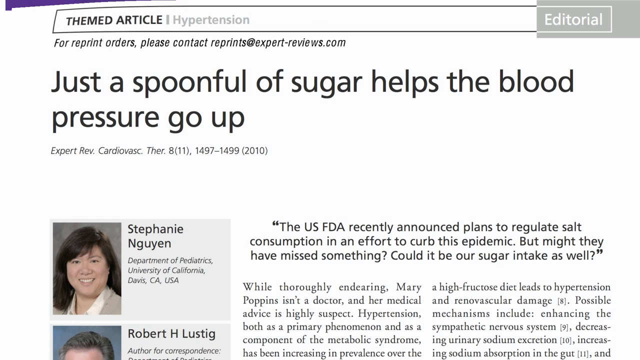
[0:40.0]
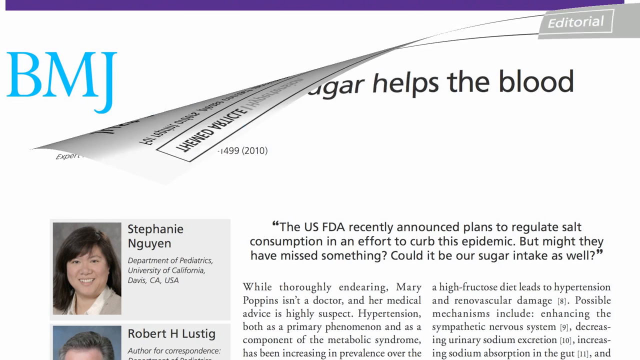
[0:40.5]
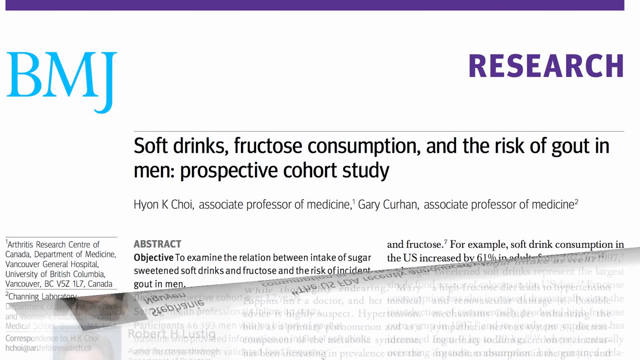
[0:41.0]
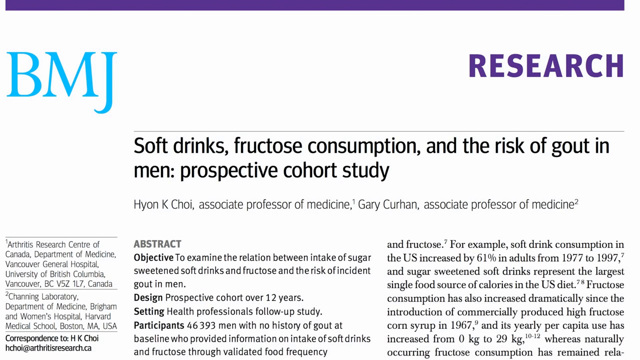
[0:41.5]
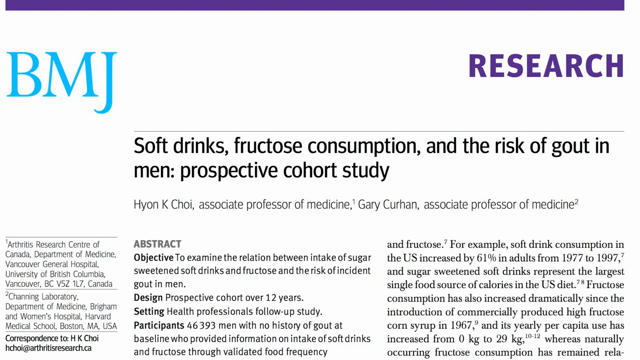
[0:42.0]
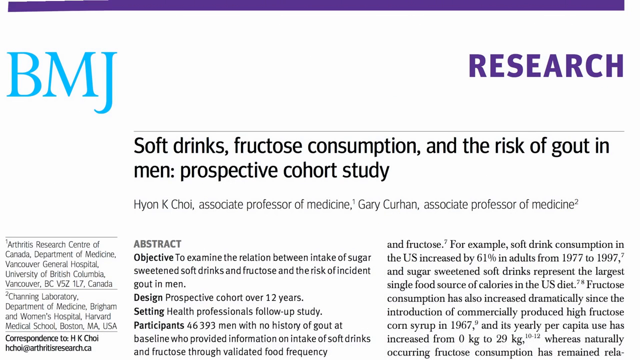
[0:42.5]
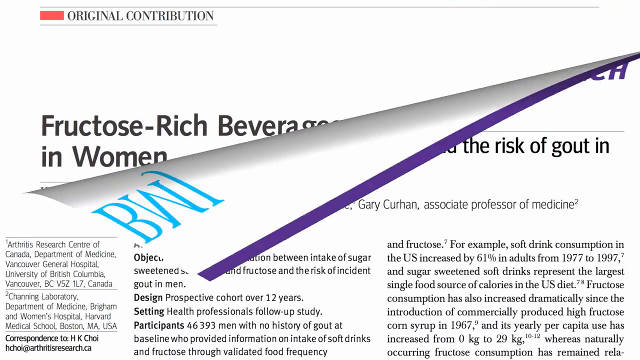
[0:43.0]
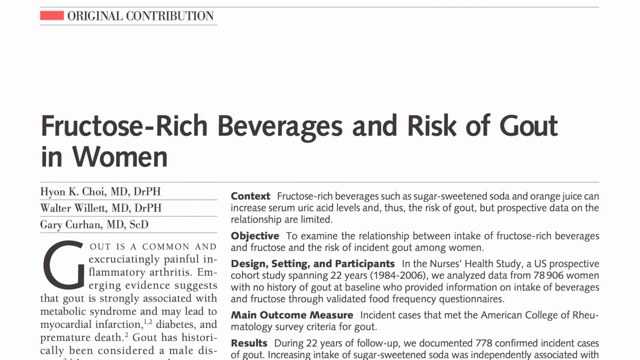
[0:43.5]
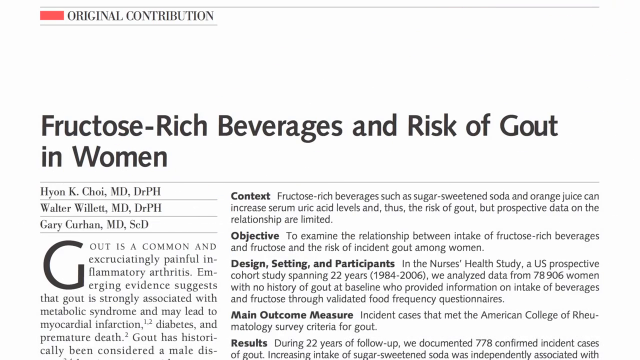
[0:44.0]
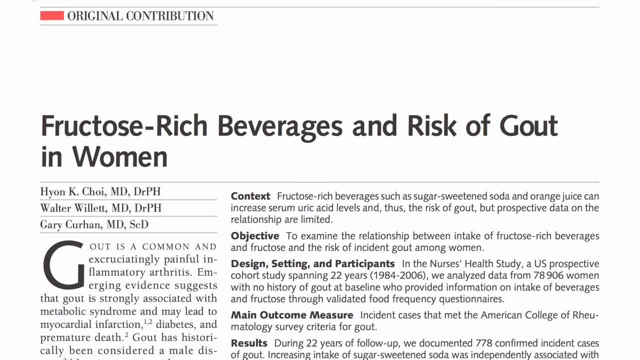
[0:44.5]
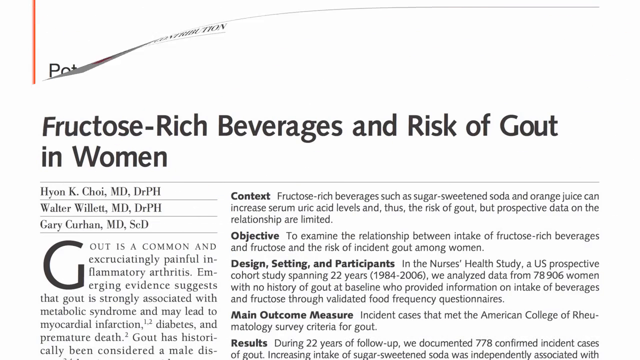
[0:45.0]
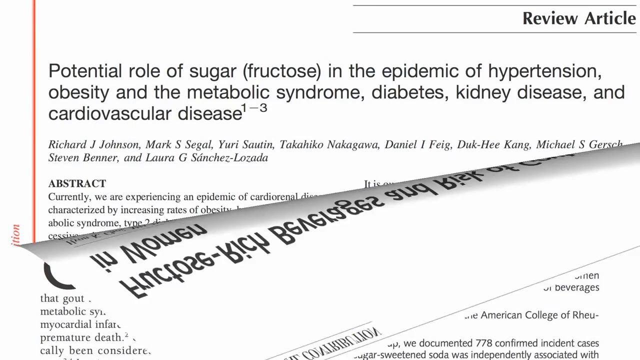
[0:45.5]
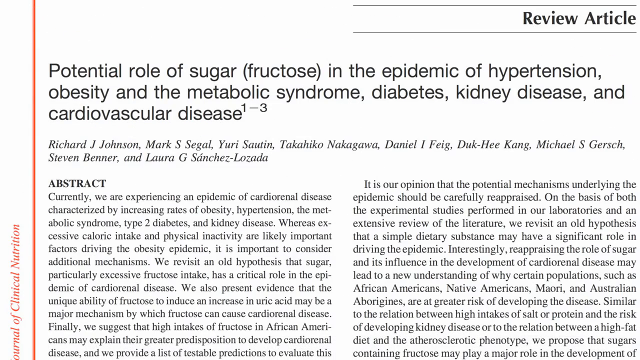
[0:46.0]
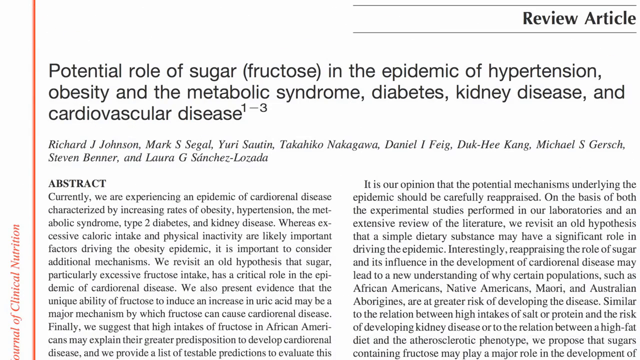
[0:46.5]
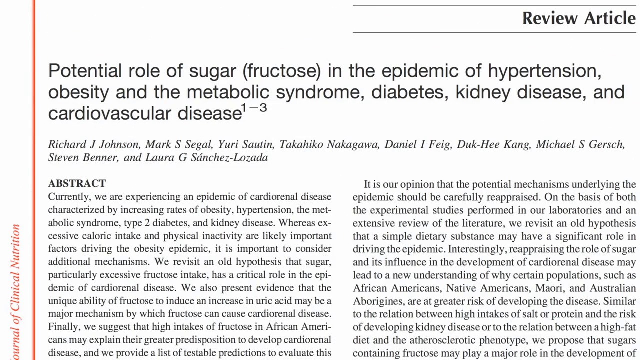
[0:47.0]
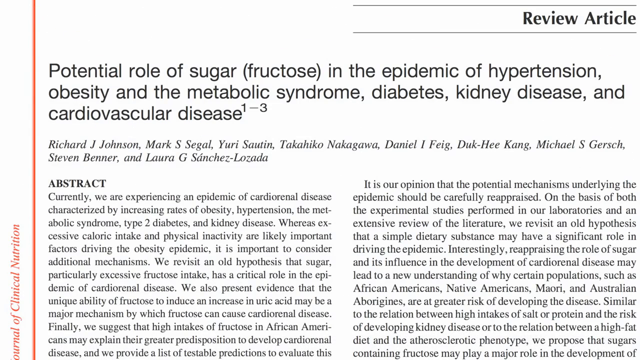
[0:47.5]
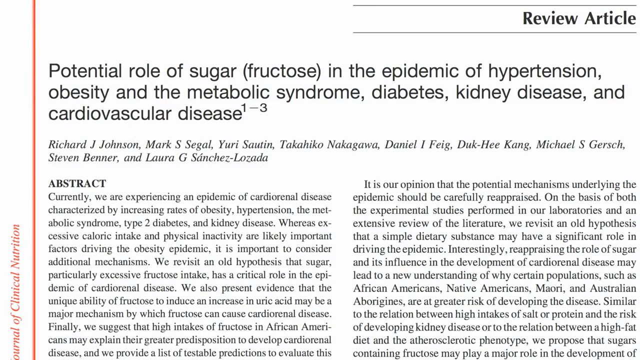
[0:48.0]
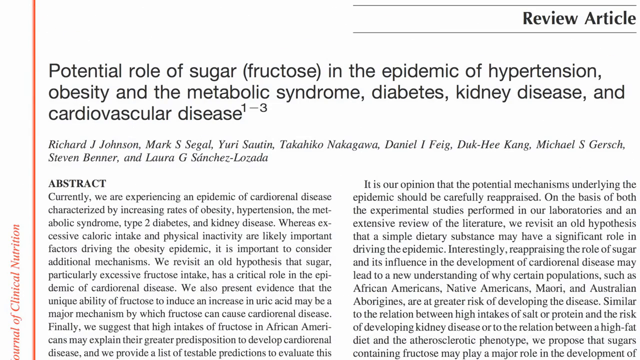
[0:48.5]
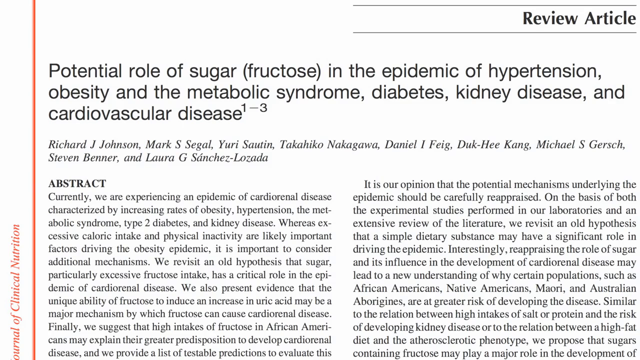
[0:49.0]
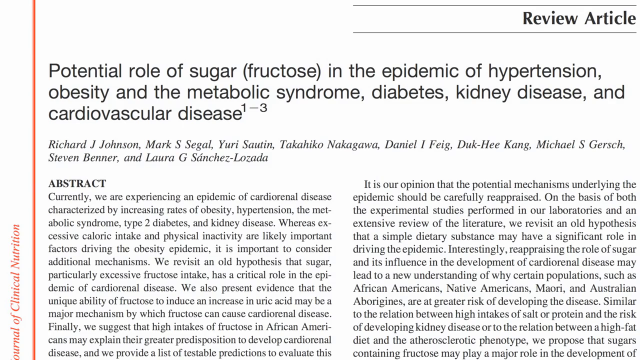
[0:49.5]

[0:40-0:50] On a white background there is what looks to be possibly a newspaper article, with "Just a spoonful of sugar helps the blood pressure go up" at the top. There is a picture of a woman, along with her name and some information in a box, and additional writing at the bottom of the screen. Then a new page pops up with "B.M.J." in blue letters in the upper left corner and "Research" on the right side. Below that it reads "soft drinks, fructose consumption and the risk of gout in men. Perspective, cohort, study," with more writing at the bottom of the screen.